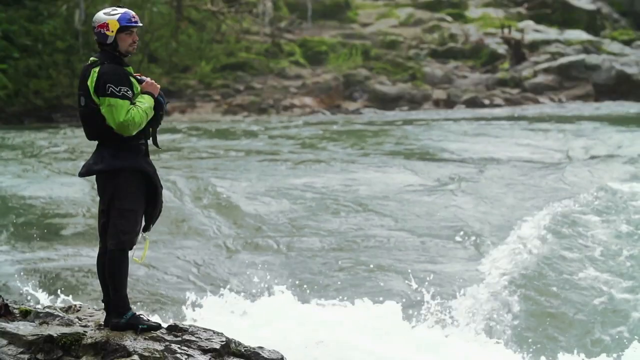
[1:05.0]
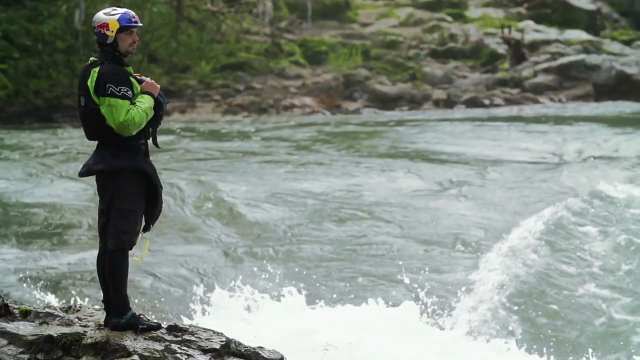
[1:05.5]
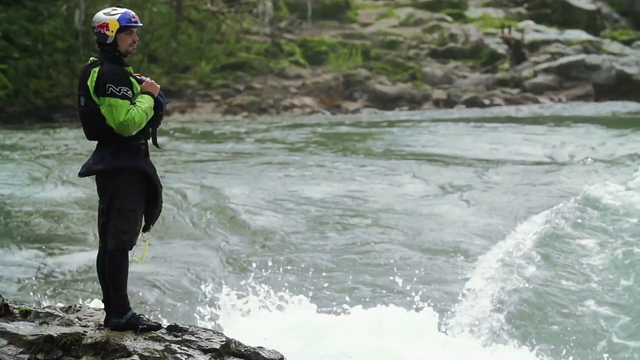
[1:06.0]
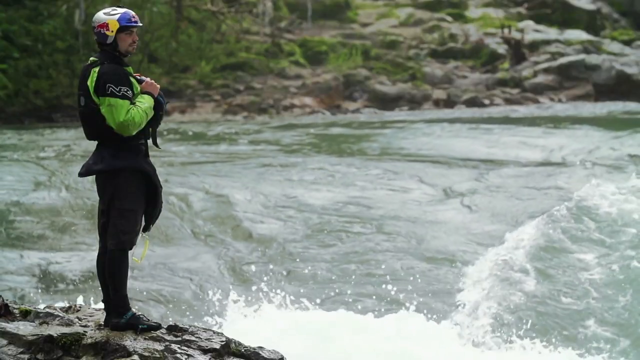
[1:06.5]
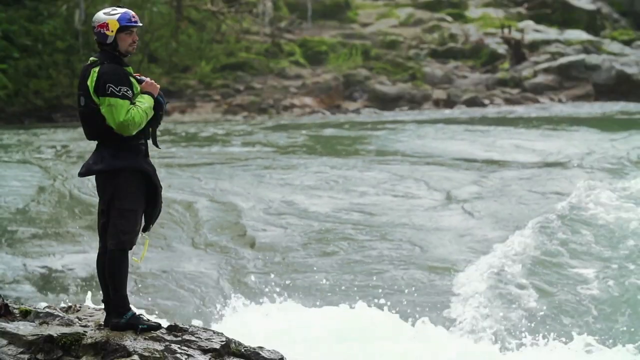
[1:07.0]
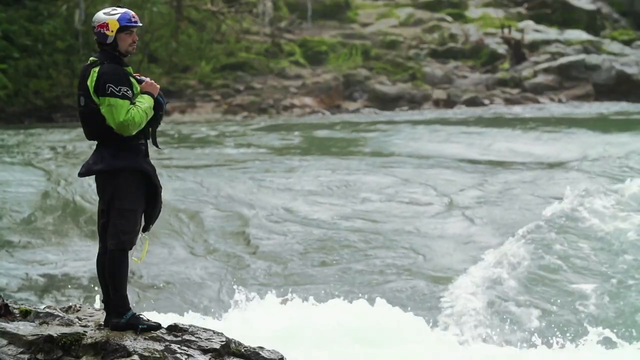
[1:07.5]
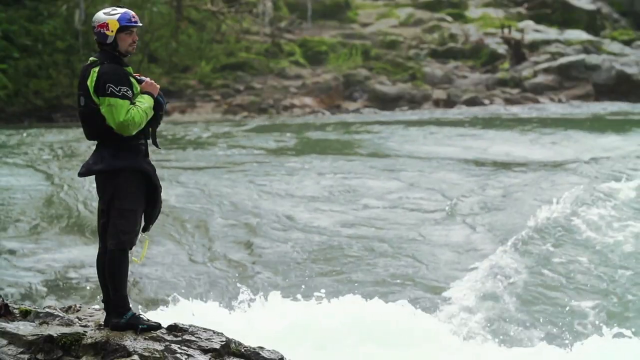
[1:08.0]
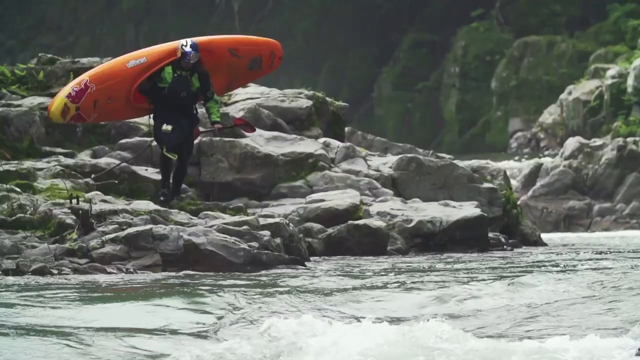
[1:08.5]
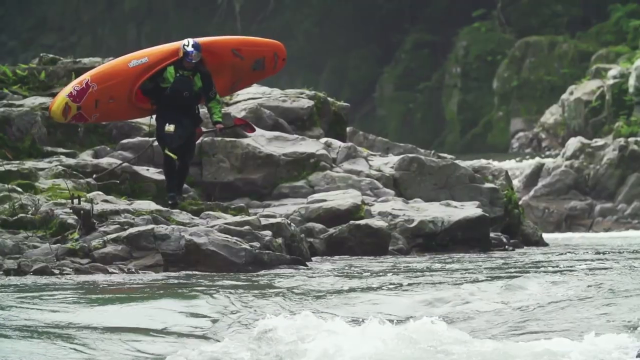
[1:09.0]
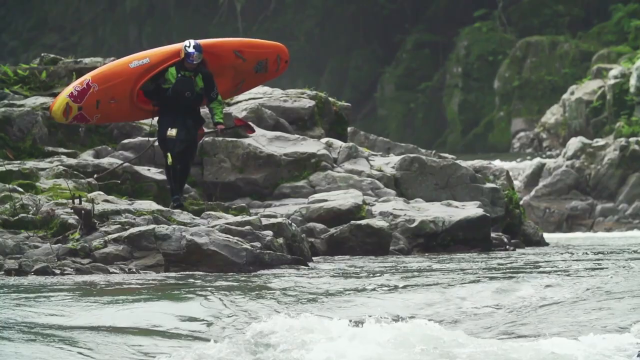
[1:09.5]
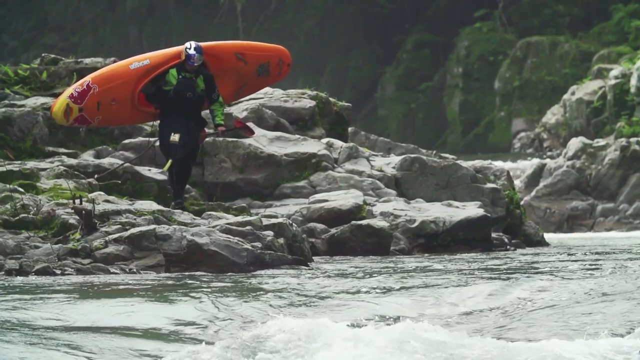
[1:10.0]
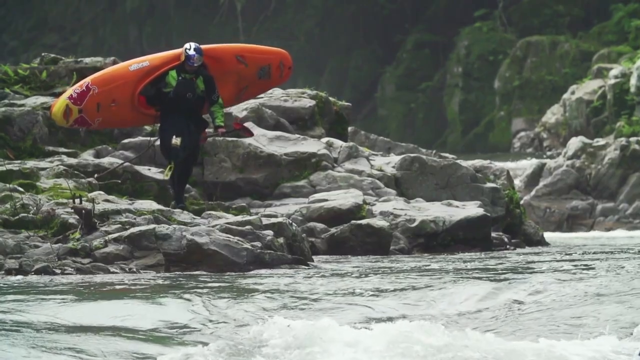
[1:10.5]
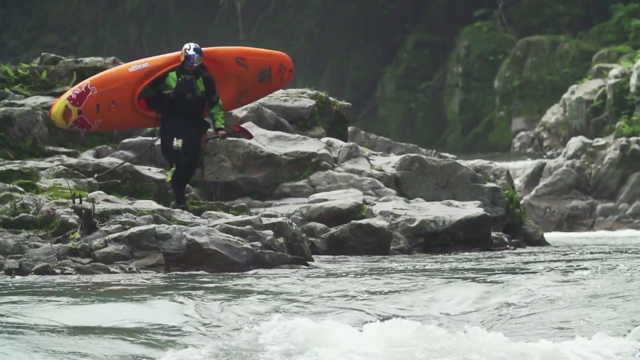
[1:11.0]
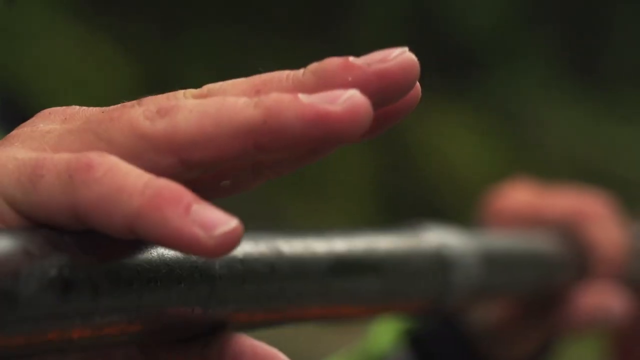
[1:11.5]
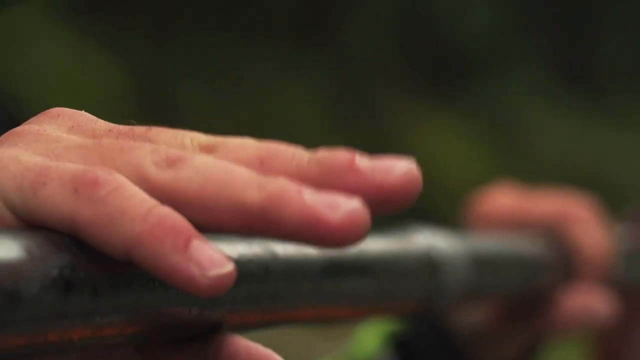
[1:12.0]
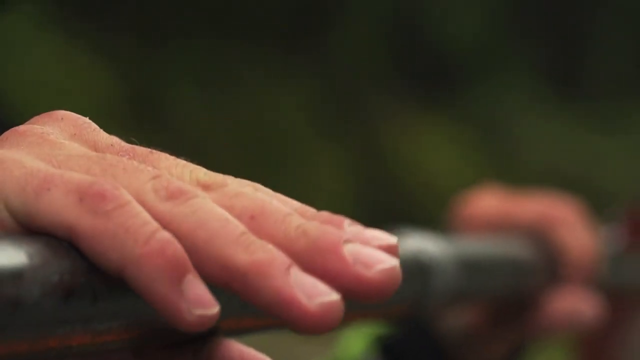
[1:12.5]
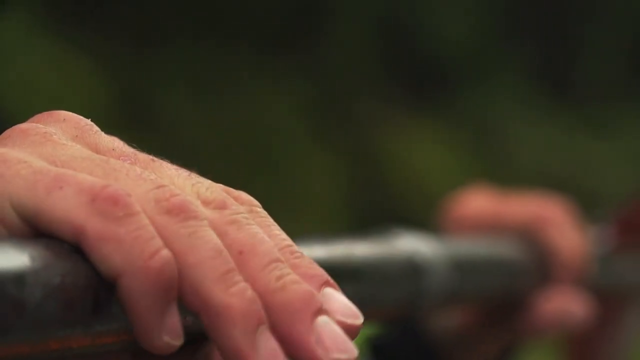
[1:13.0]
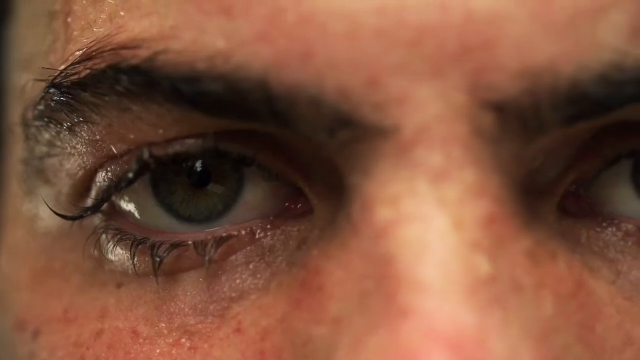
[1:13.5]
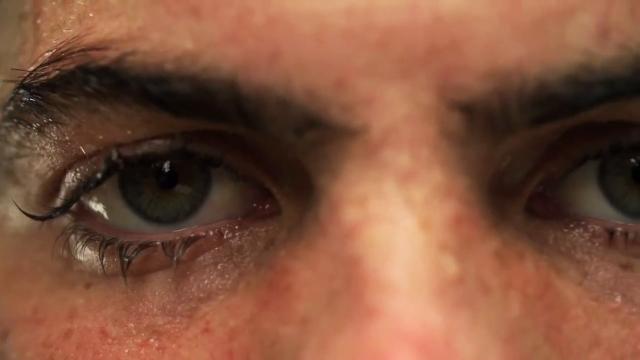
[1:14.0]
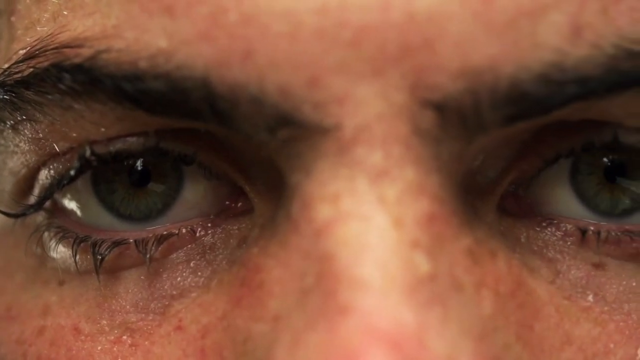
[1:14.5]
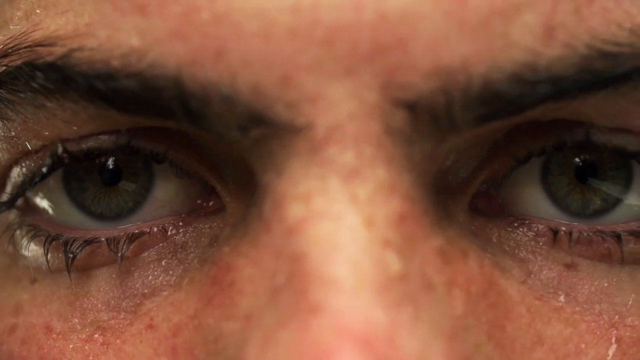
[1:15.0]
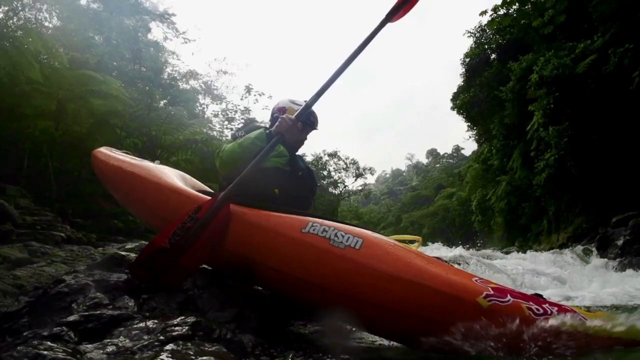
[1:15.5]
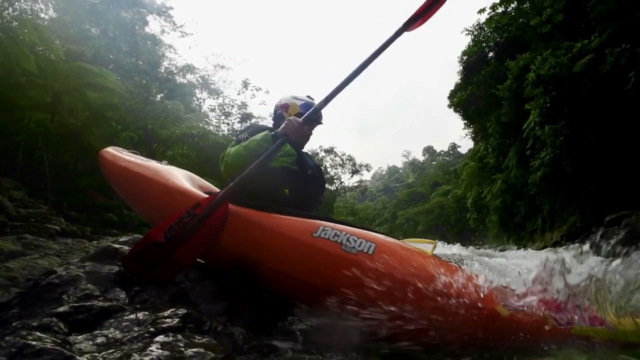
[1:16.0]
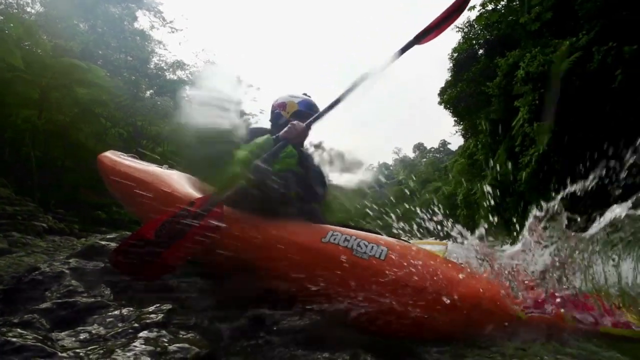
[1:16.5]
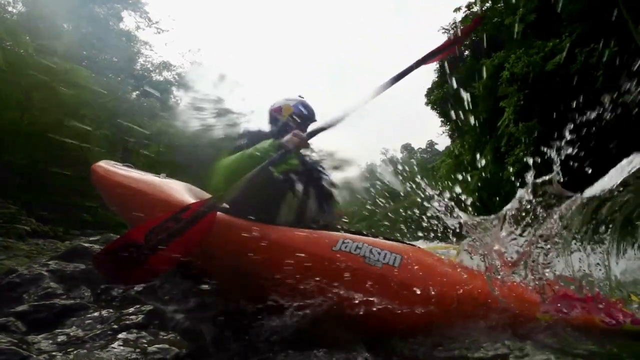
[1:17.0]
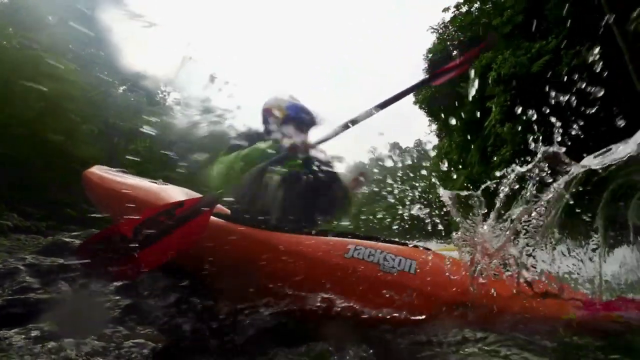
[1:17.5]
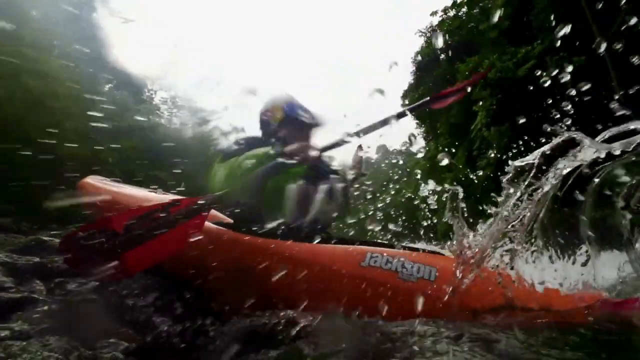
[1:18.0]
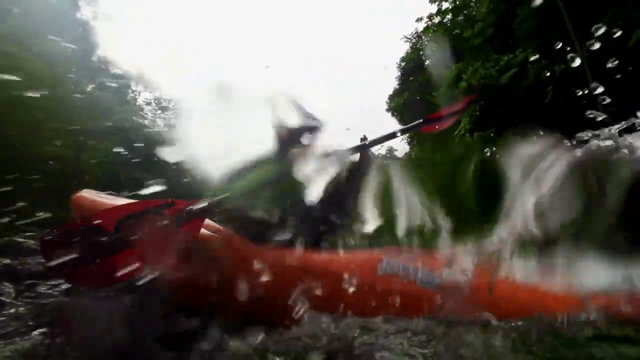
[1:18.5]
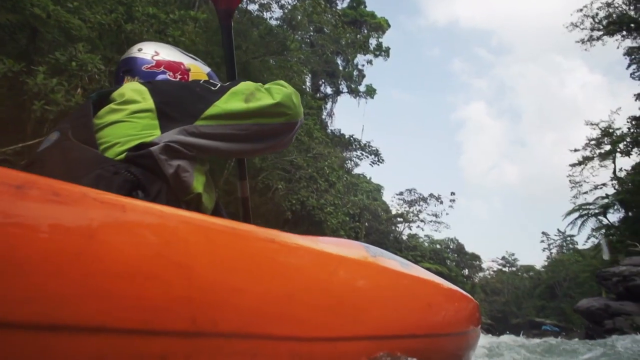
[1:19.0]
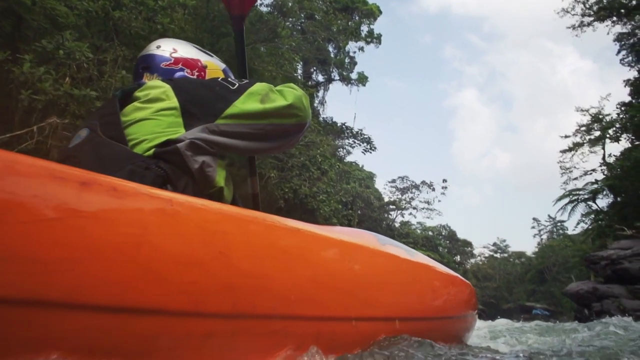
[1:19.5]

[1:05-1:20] A man gets ready to kayak into a dangerous river. Waves crash and the water pools in different areas, and the video zooms in on the kayaker's face. The Red Bull logo is in the bottom right corner, and the same logo is on his helmet. He wears a green and black wetsuit, and his orange kayak has the Red Bull logo at the front. He slides himself into the water while subtitles mention his heartbeat. Right before he pushes in, the camera pans across the front of his face, showing an intense, determined look in his eye, and he puts his paddle down and pushes into the water.